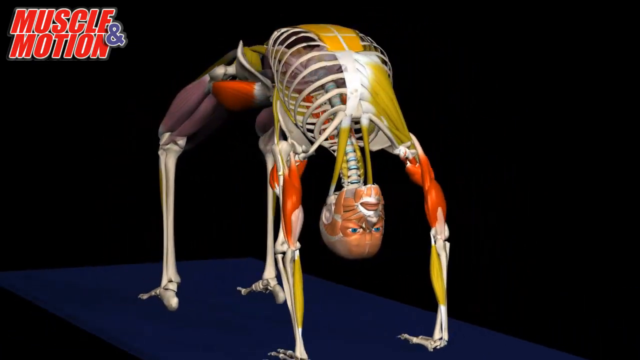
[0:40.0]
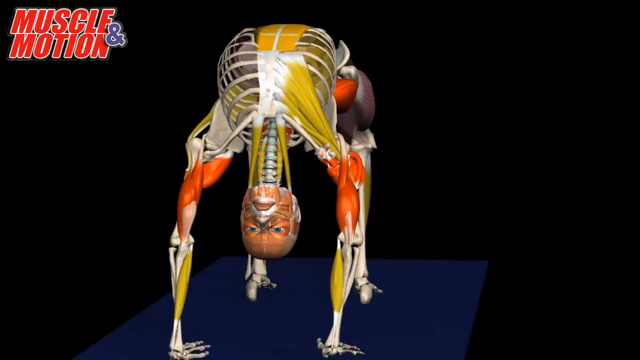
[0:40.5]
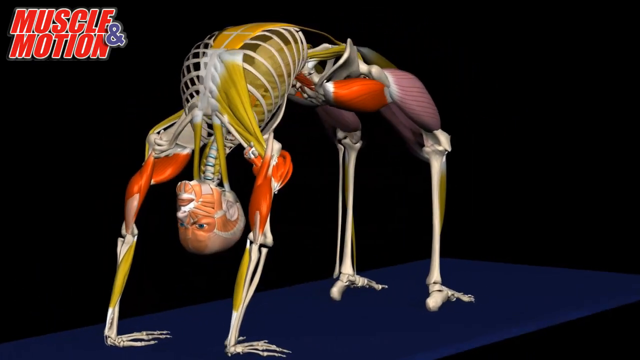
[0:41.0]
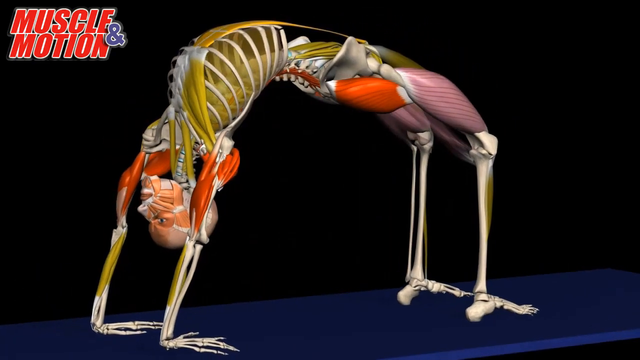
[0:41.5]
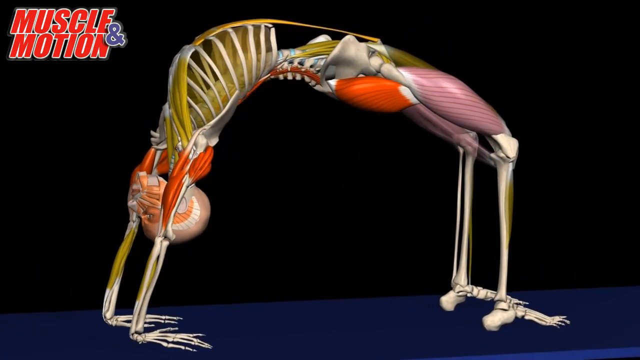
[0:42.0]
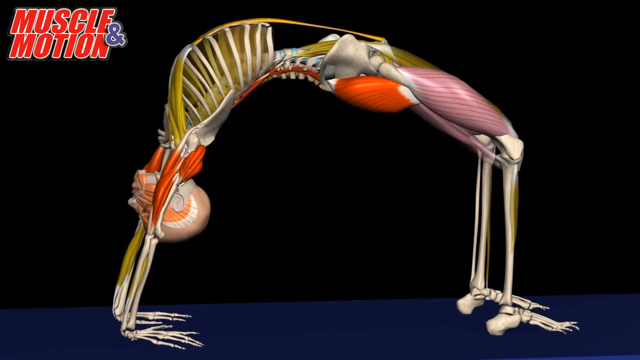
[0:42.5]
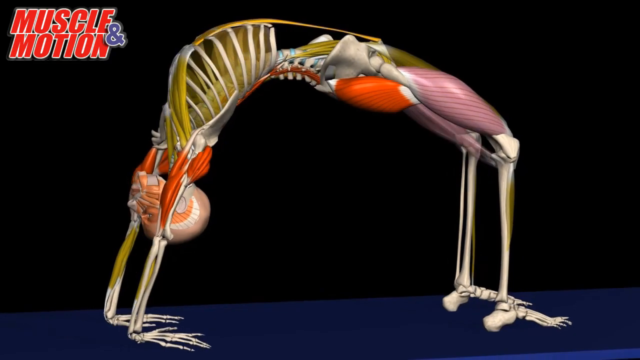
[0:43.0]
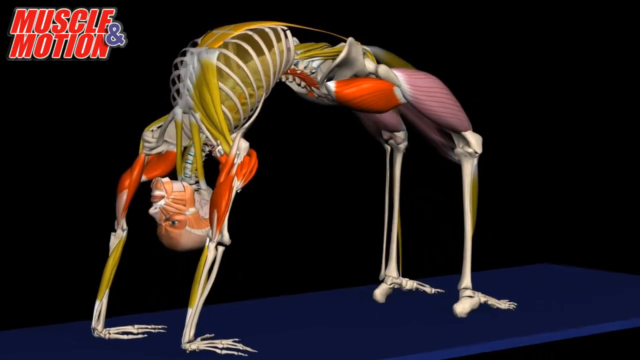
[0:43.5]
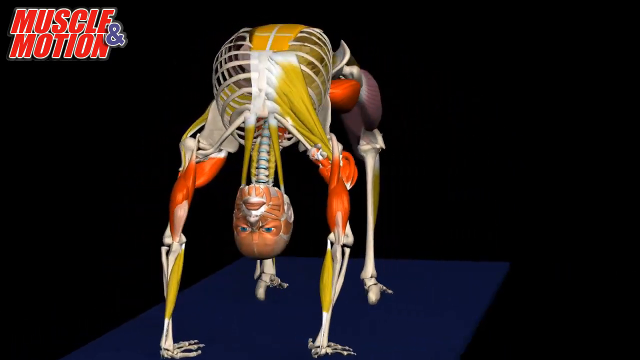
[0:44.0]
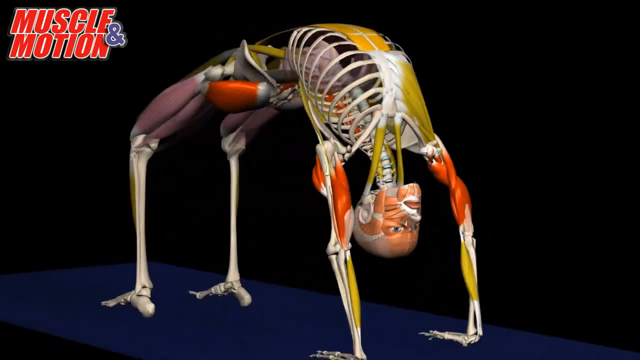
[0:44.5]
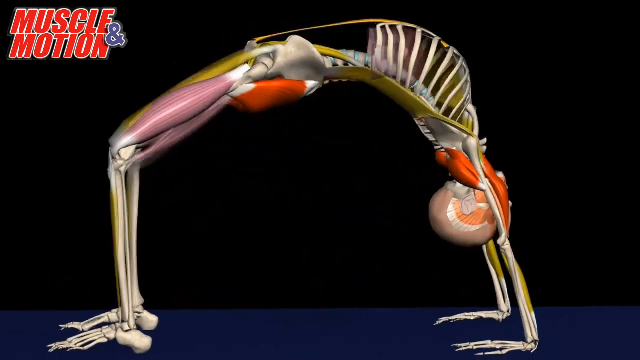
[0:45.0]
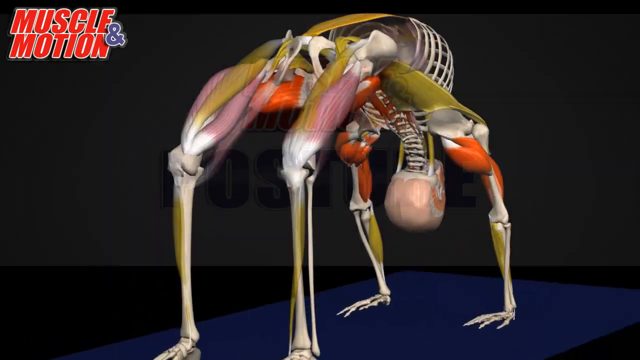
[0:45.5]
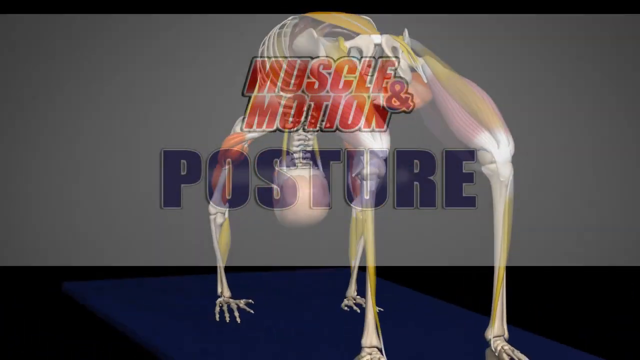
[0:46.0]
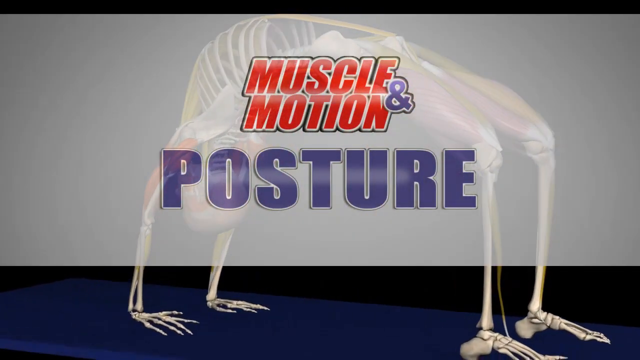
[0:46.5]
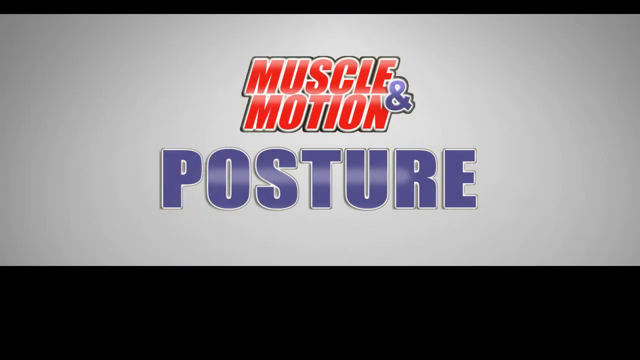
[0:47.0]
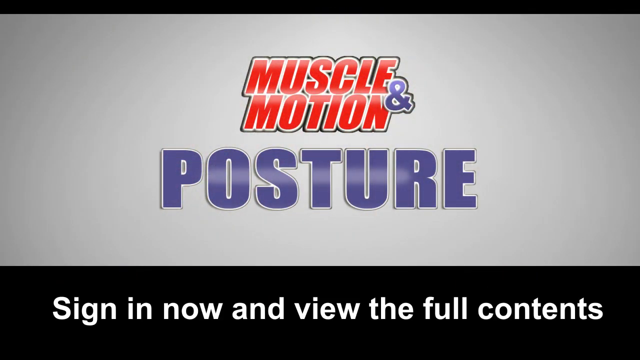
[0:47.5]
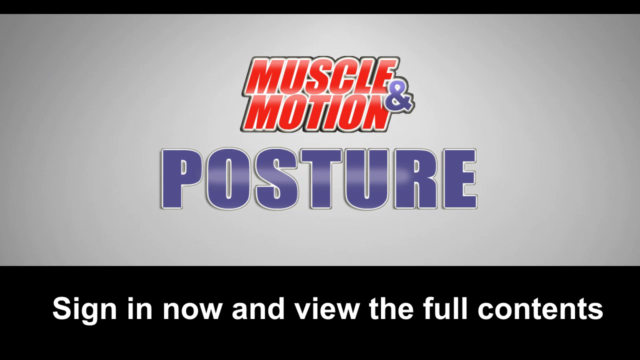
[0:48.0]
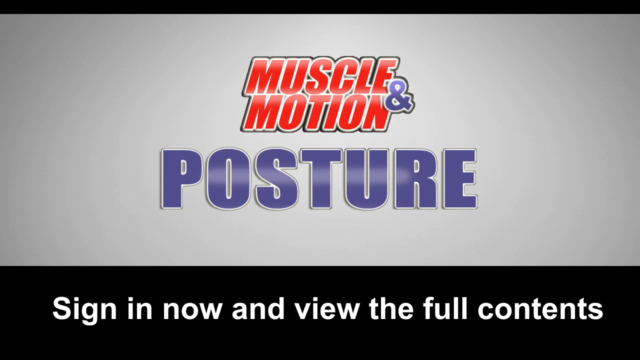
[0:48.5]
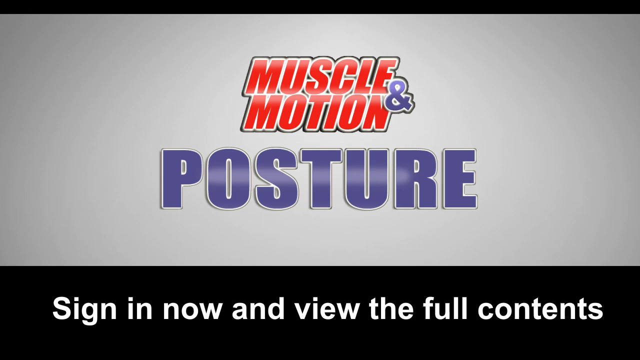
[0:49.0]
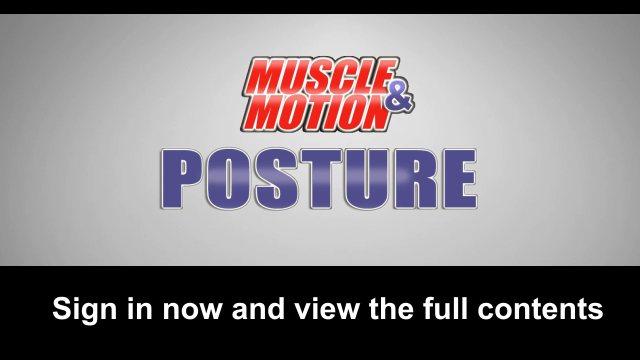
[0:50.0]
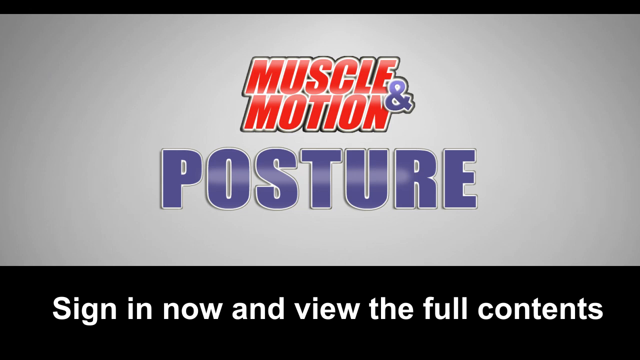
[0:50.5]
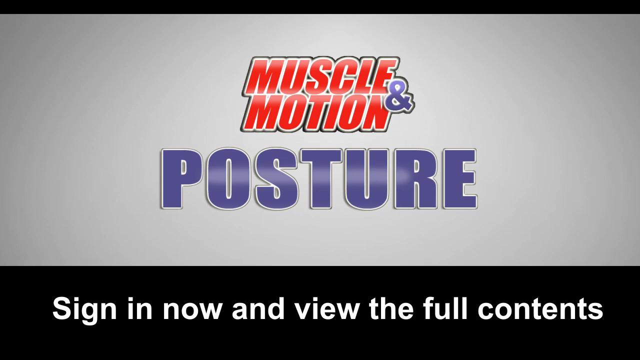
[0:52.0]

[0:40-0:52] The background is an empty black color, with "Muscle & Motion" in red text in the upper left corner and the "&" in blue. A 3D model of a person pushes themselves off the ground on all fours and hangs upside down. The view rotates the model until their right side is visible, then turns back around to rotate them to their left 360 degrees. The video fades out and fades back in on a white background showing the red and blue "Muscle & Motion" logo, with bold blue text beneath it forming the word "Posture". Beneath that, a black section at the bottom holds the words "Sign in now and view the full contents" in white text. The video ends after this.